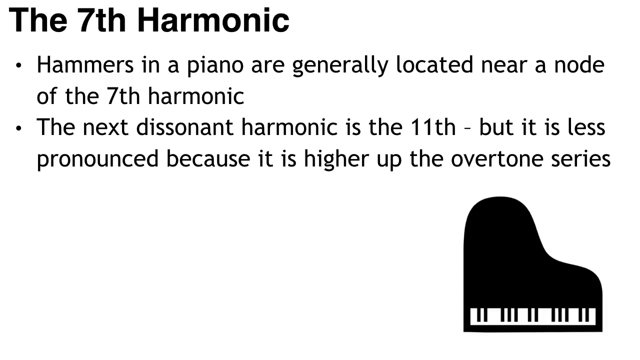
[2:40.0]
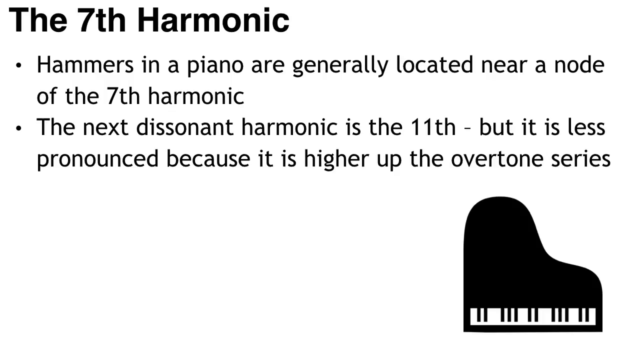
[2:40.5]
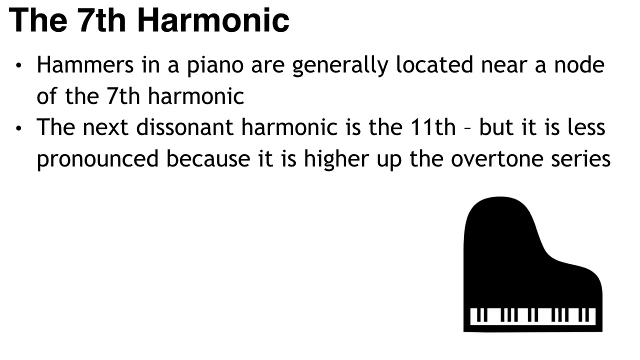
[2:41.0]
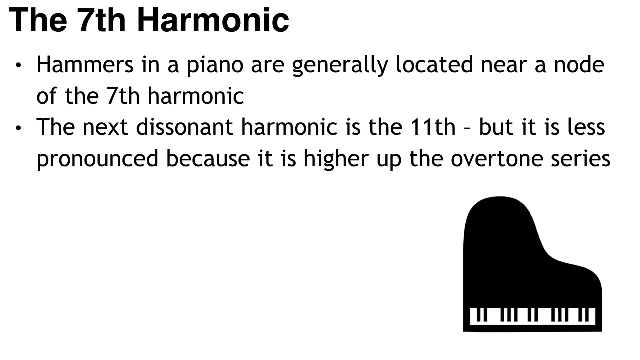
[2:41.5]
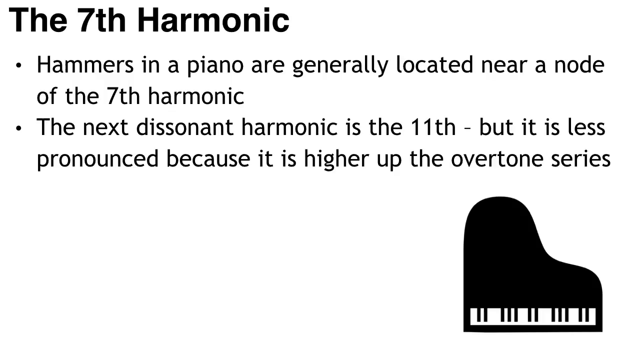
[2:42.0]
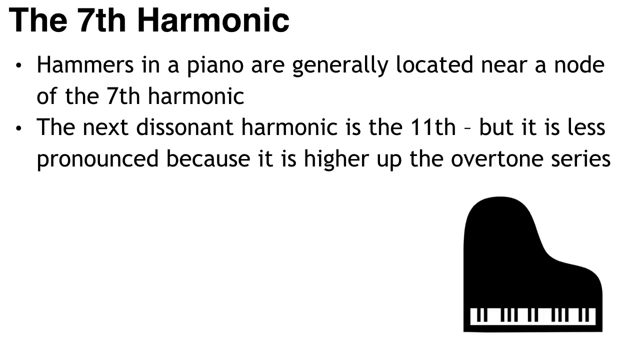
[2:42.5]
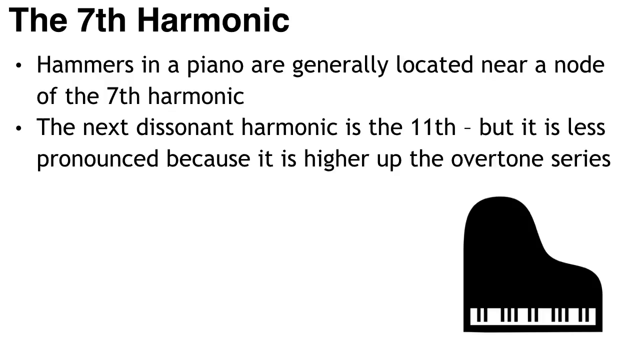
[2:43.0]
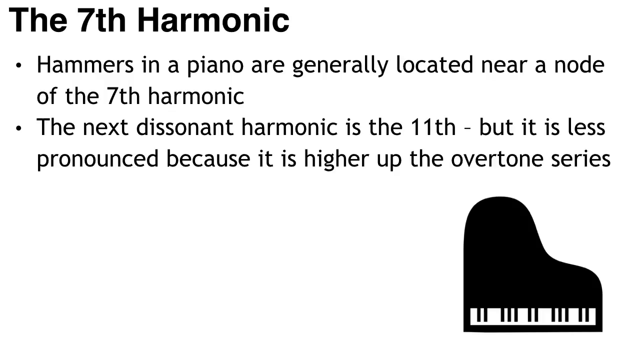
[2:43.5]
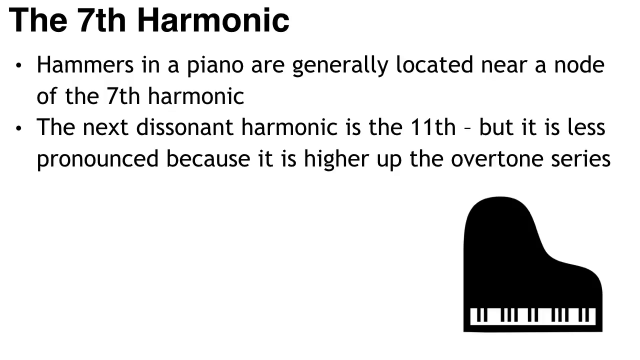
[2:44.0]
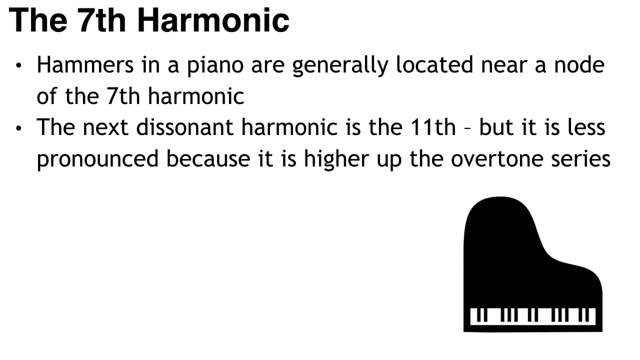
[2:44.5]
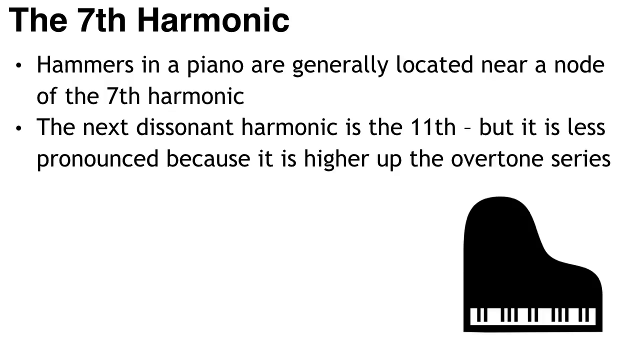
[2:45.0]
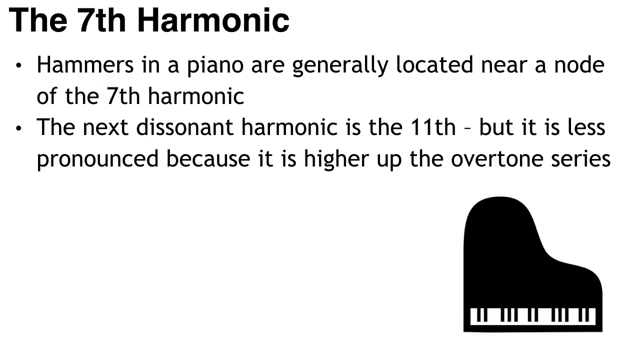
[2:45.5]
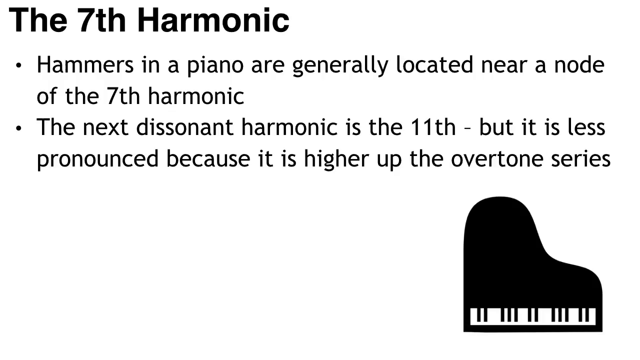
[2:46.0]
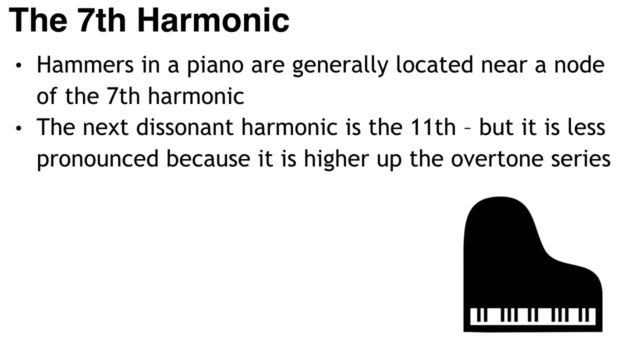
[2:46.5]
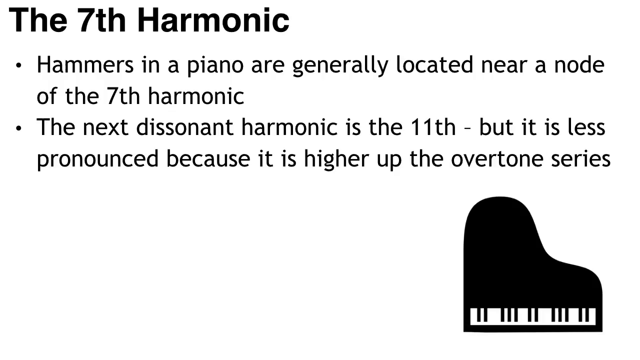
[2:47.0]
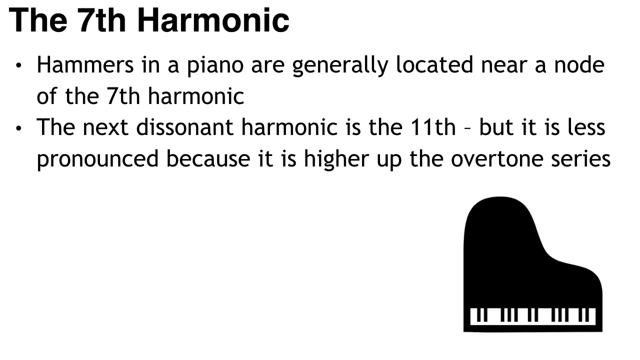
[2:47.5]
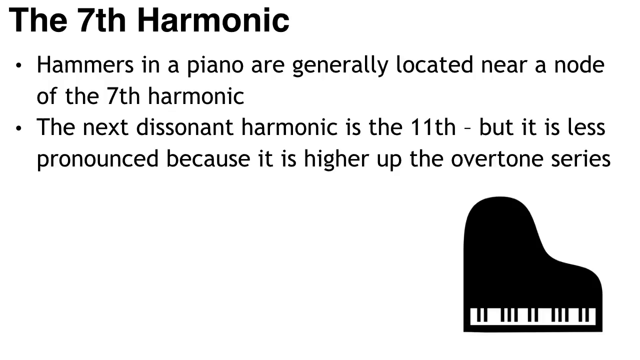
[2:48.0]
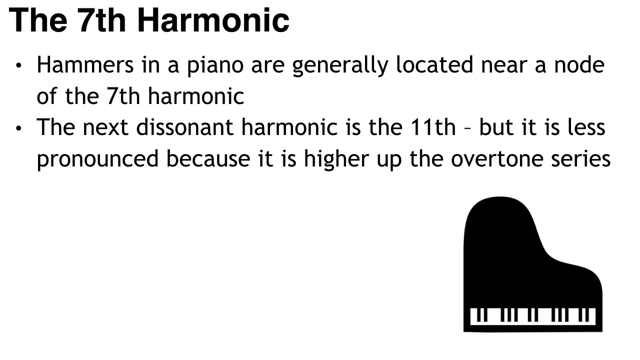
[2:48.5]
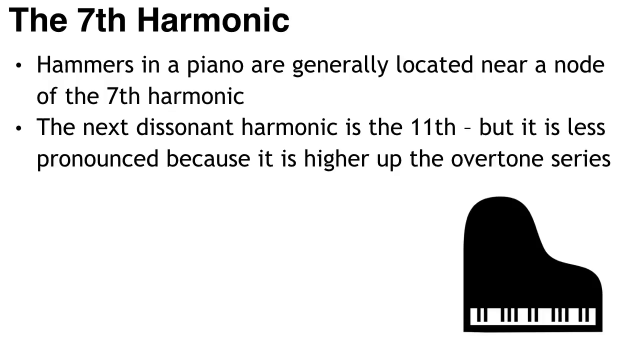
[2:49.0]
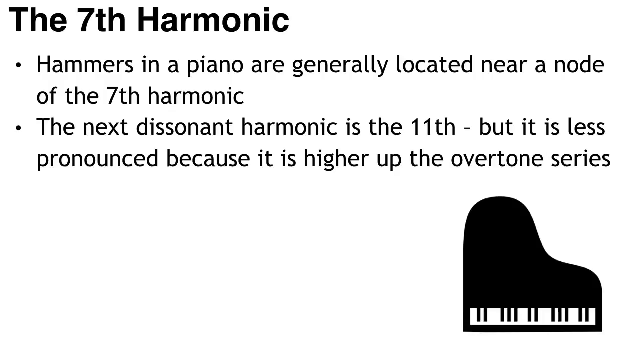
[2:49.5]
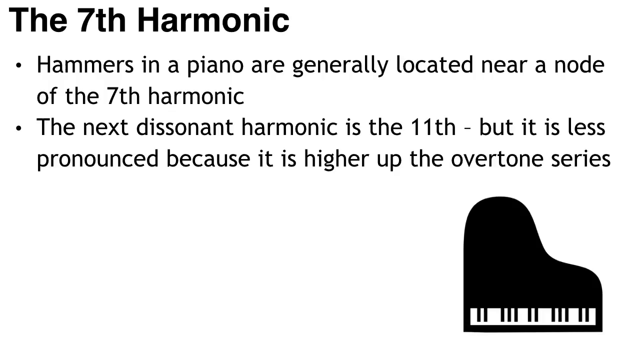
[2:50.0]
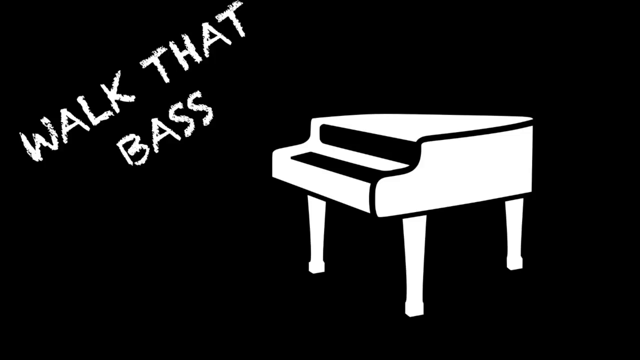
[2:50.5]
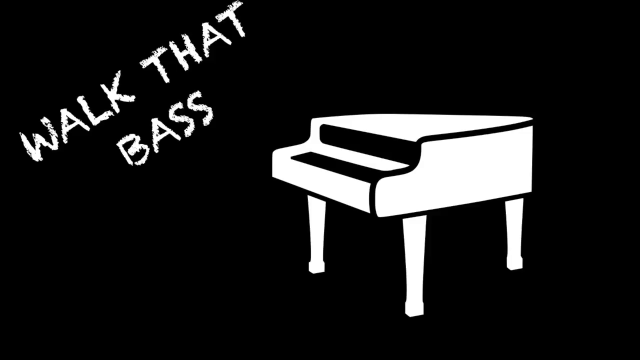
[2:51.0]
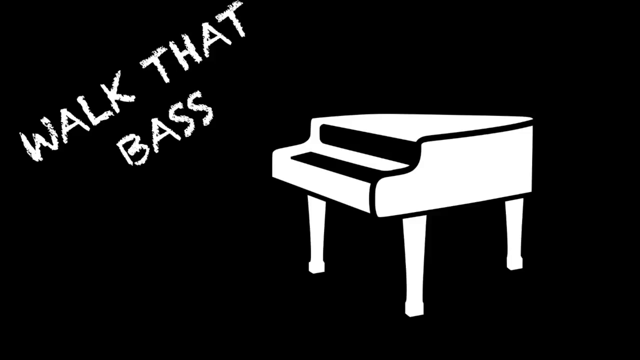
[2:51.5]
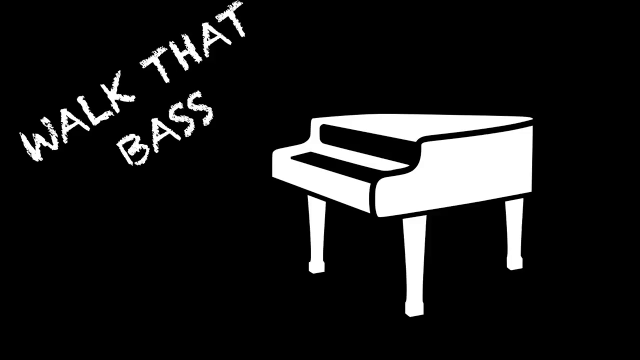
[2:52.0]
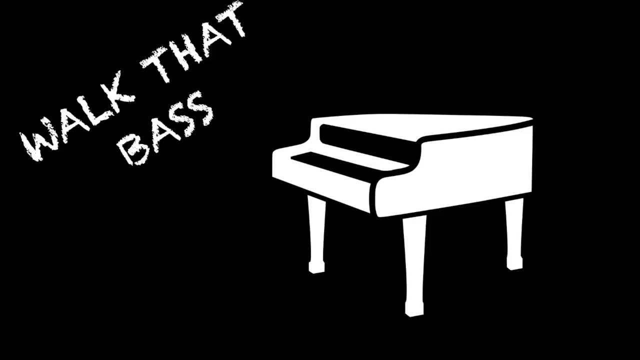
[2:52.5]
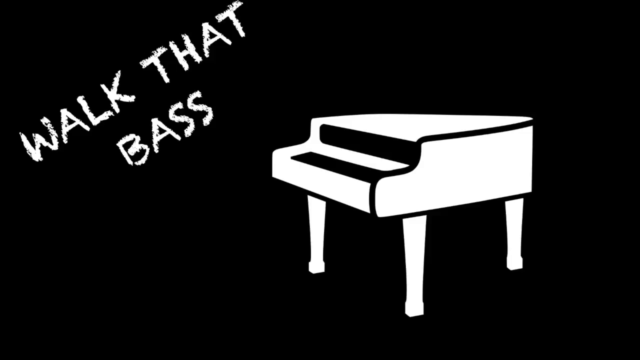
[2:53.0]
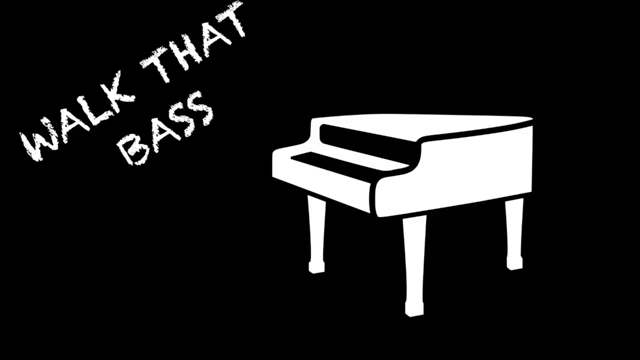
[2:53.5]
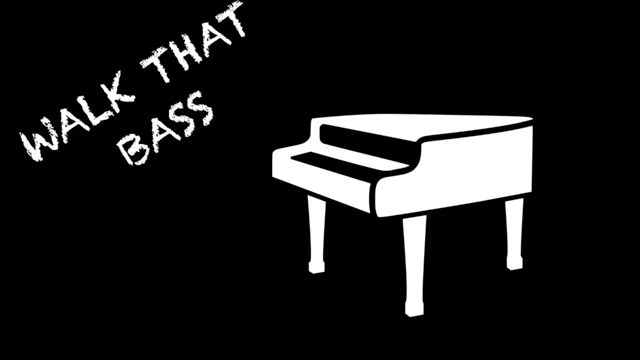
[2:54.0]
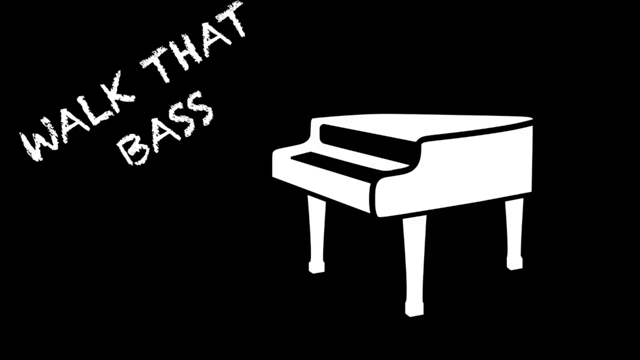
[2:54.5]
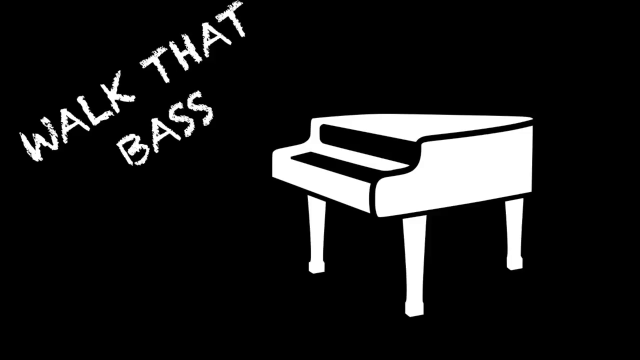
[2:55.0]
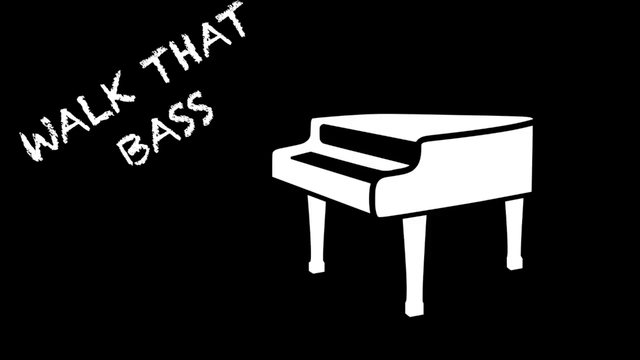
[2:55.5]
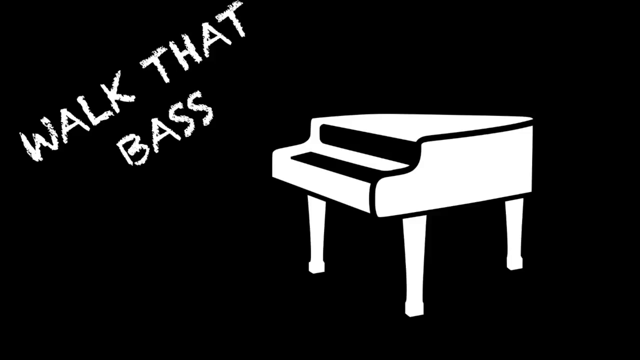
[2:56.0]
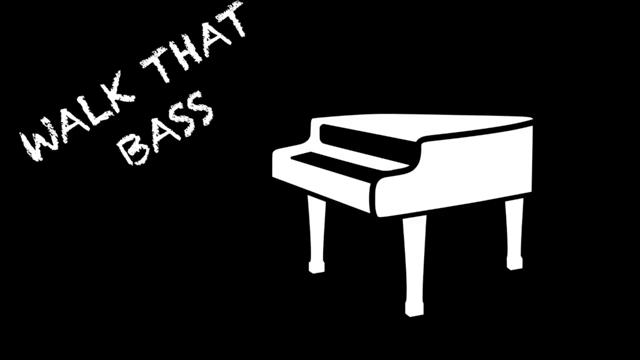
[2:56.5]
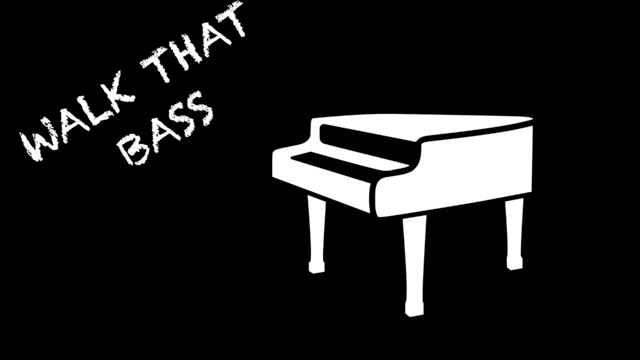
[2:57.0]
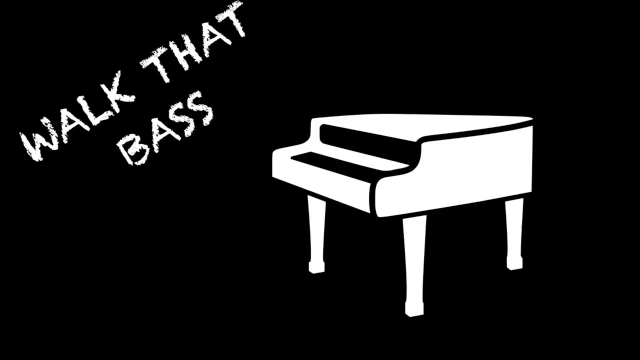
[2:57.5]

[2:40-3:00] A page titled "The 7th Harmonic" in bold at the top left has two bullets: "hammers in a piano are generally located near a node of the seventh harmonic" and "the next dissonant harmonic is the 11th but it is less pronounced because it is higher up the overtone series." In the lower right is a graphic of a black grand piano with white and black keys. The entire background is white. Near the end, a new all-black image appears with "walk that base" on the left-hand side and a white grand piano image.